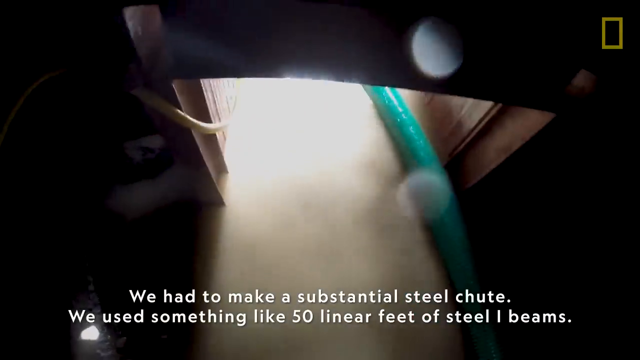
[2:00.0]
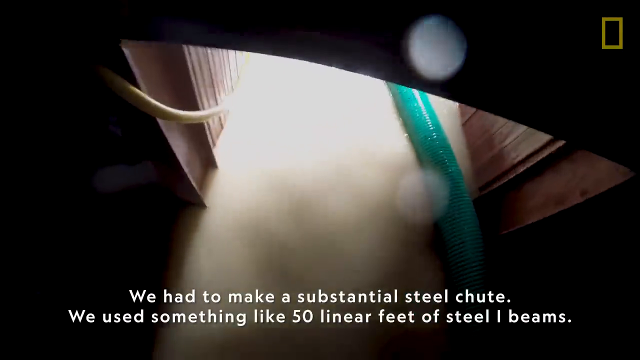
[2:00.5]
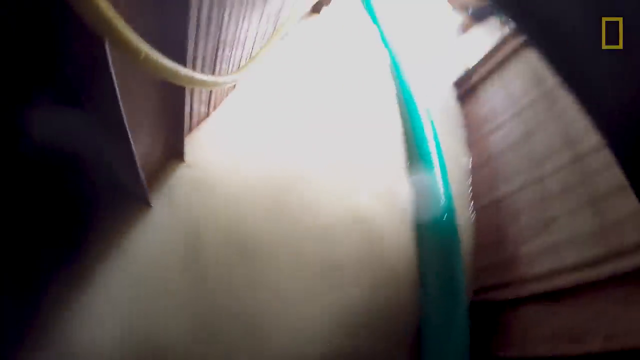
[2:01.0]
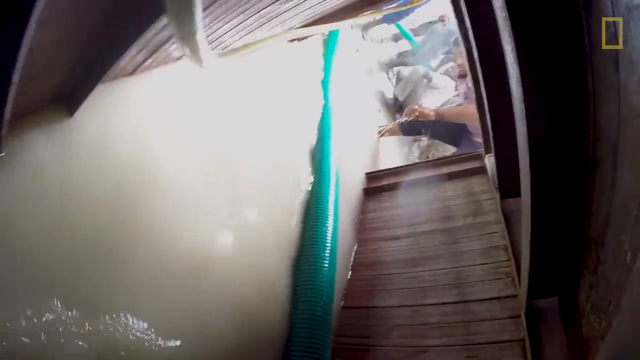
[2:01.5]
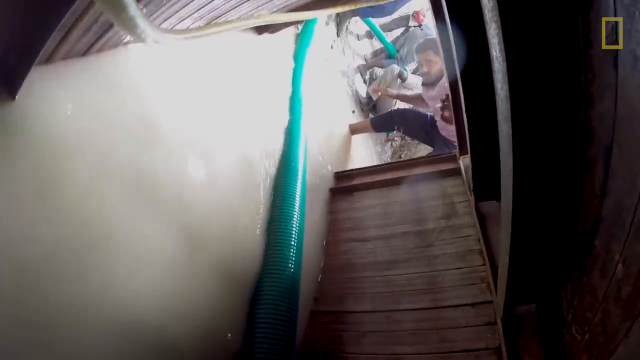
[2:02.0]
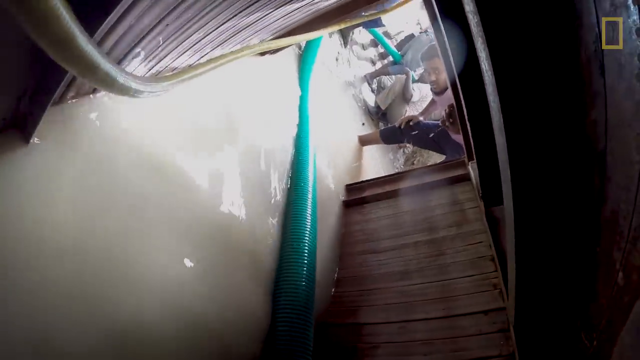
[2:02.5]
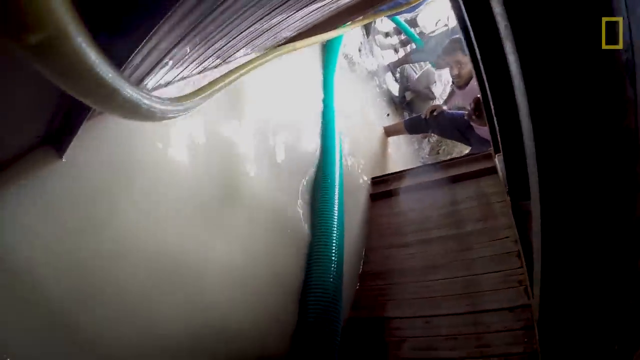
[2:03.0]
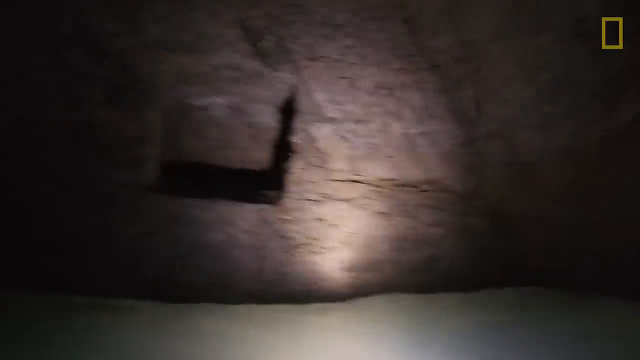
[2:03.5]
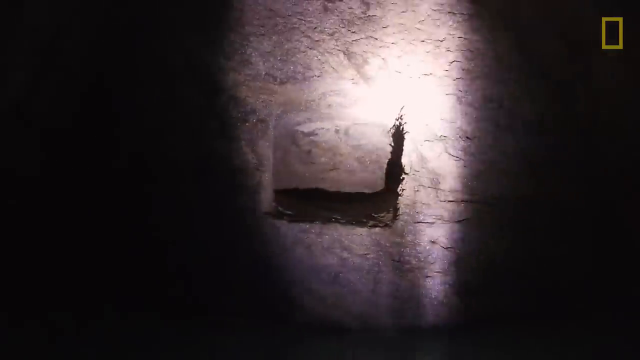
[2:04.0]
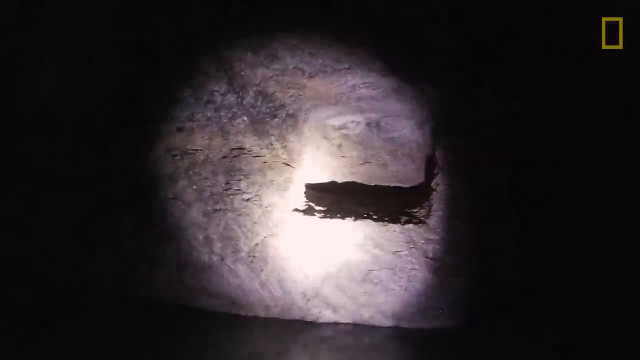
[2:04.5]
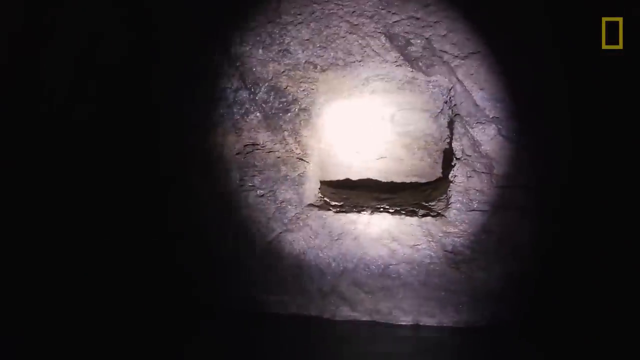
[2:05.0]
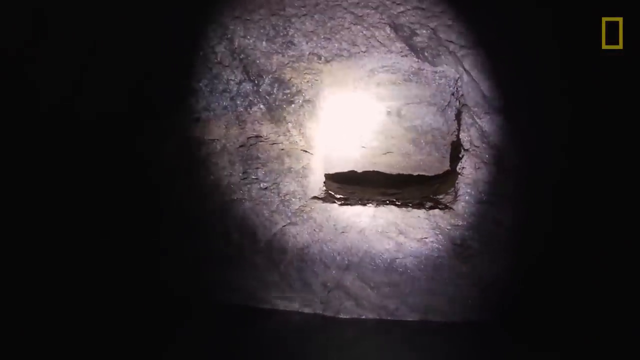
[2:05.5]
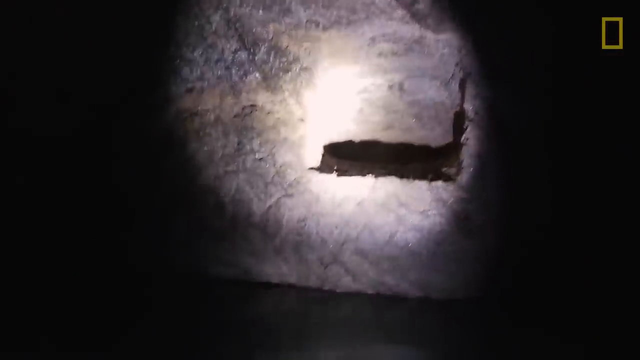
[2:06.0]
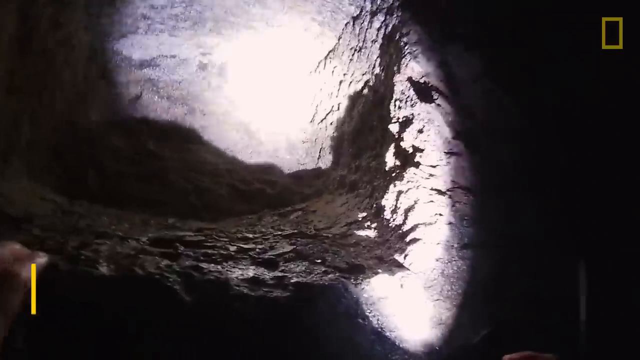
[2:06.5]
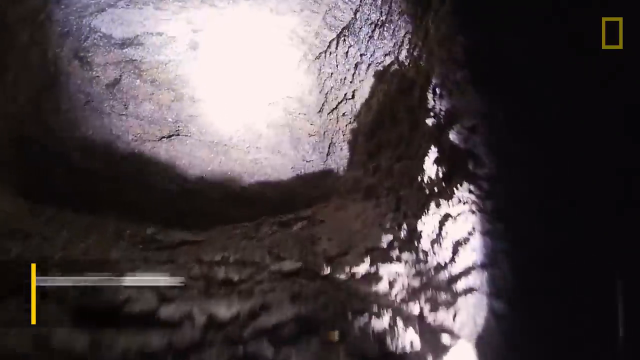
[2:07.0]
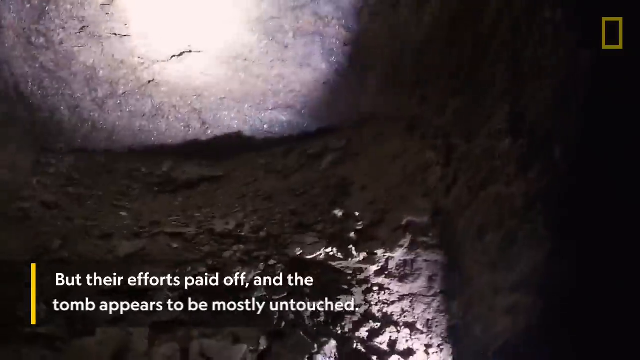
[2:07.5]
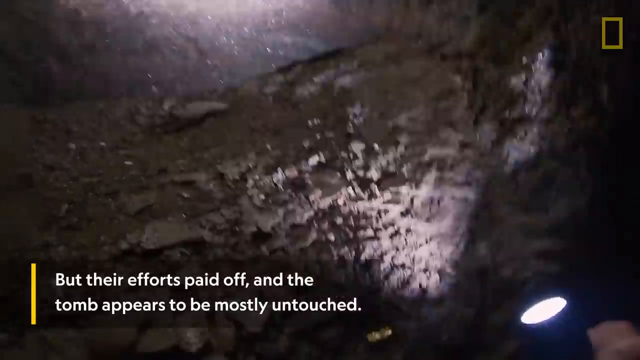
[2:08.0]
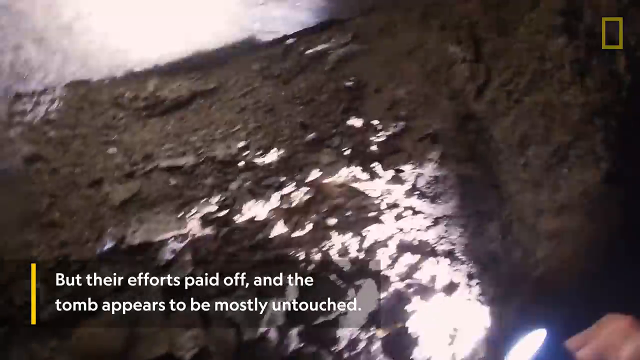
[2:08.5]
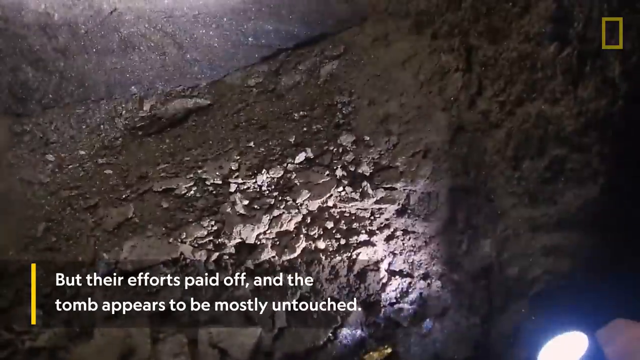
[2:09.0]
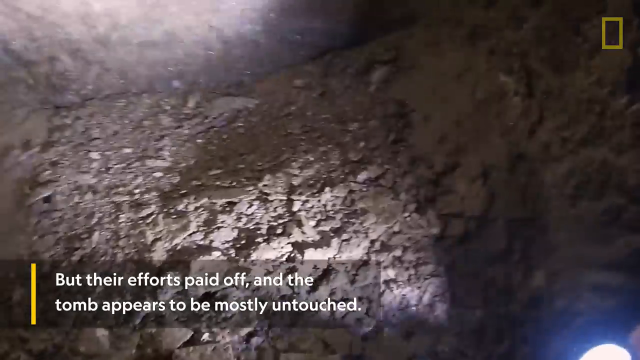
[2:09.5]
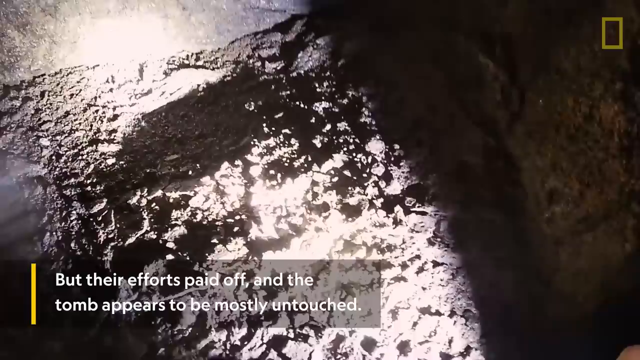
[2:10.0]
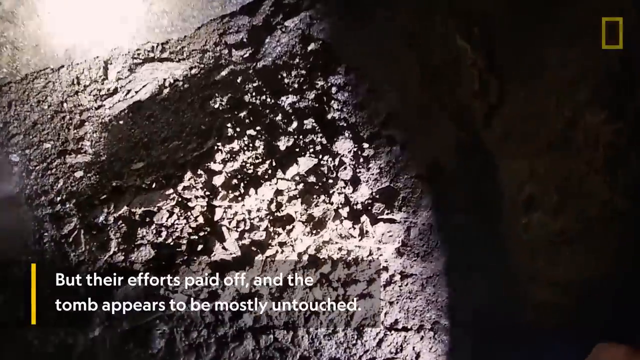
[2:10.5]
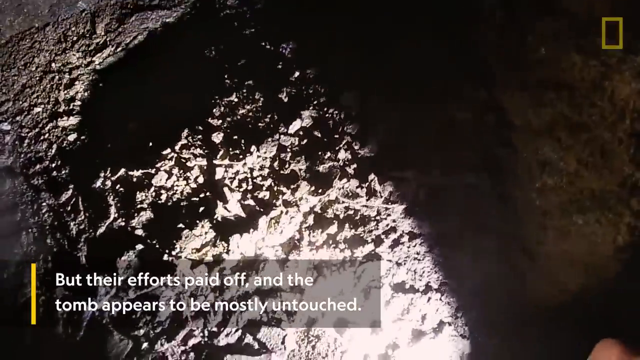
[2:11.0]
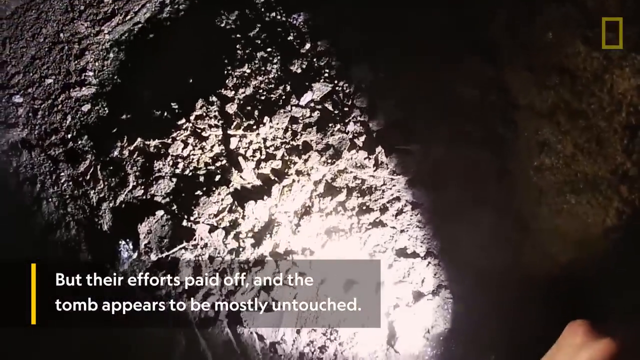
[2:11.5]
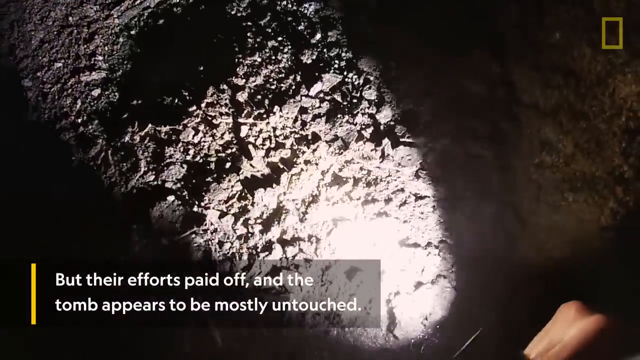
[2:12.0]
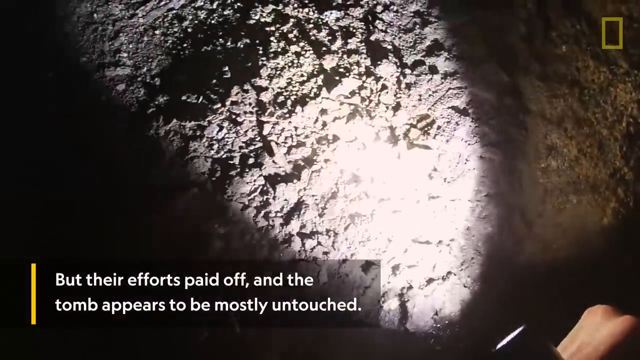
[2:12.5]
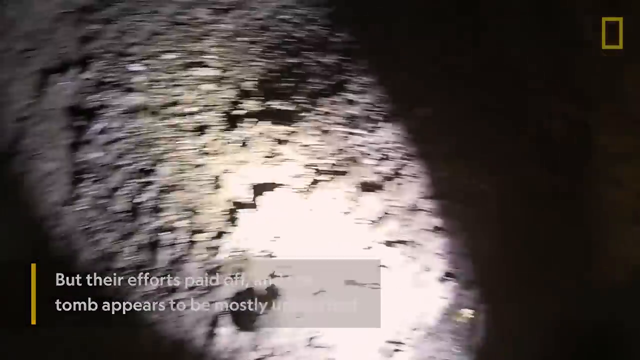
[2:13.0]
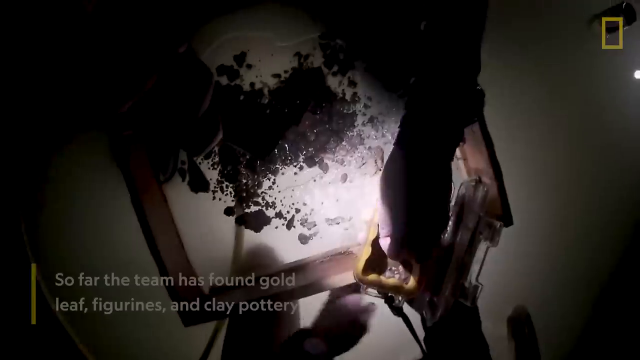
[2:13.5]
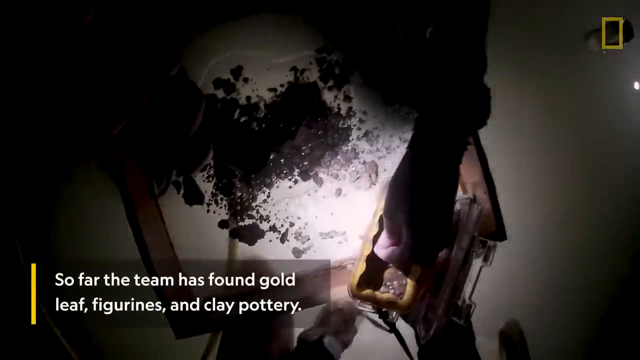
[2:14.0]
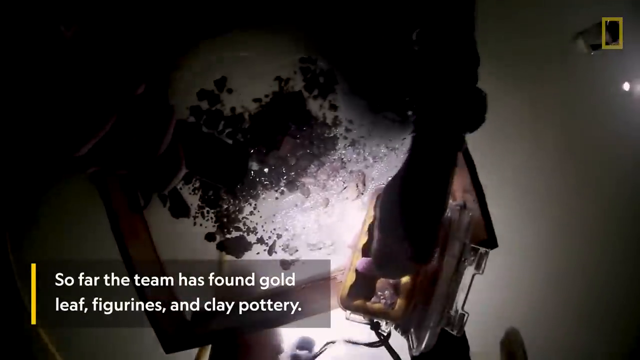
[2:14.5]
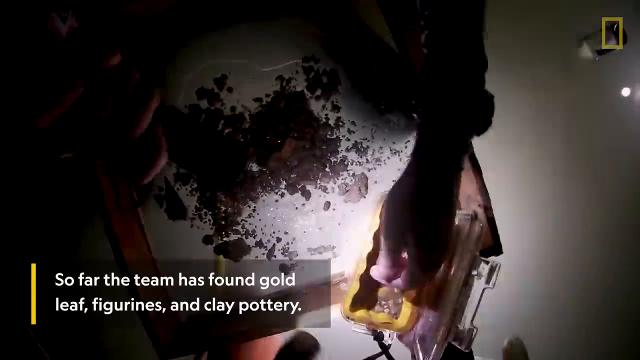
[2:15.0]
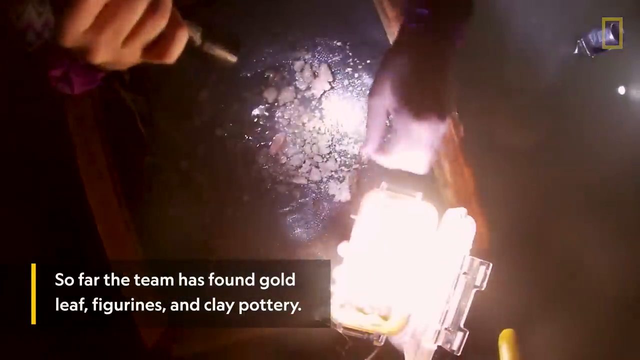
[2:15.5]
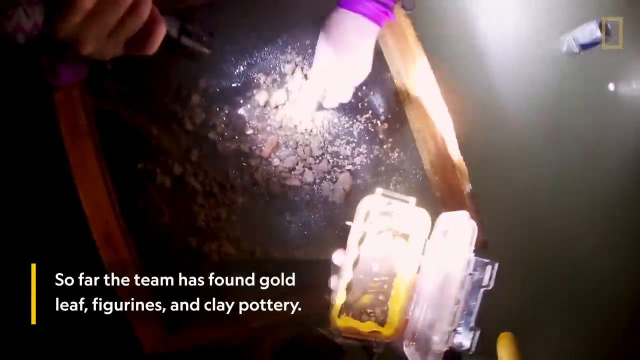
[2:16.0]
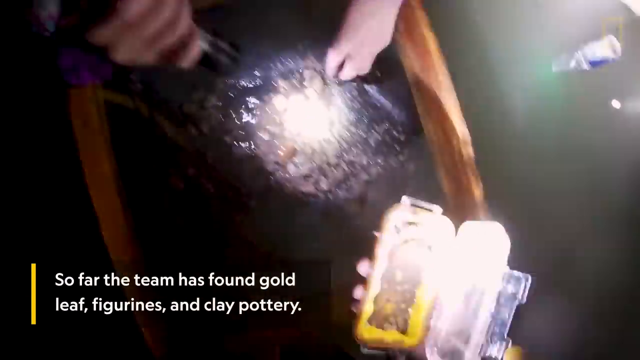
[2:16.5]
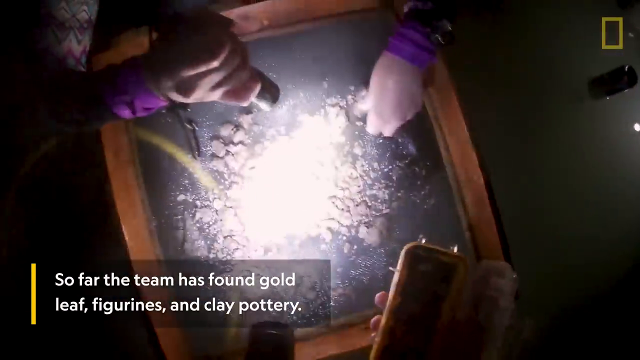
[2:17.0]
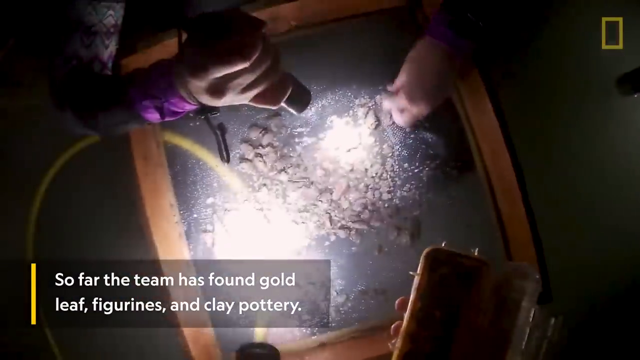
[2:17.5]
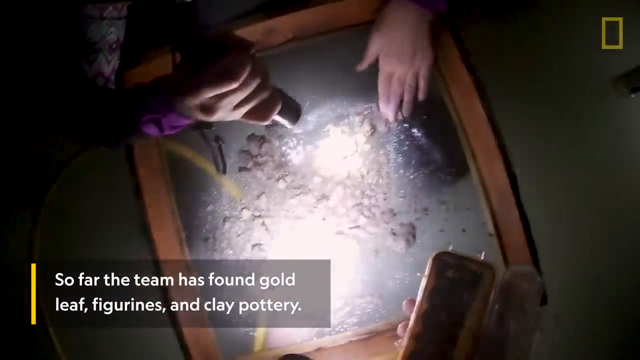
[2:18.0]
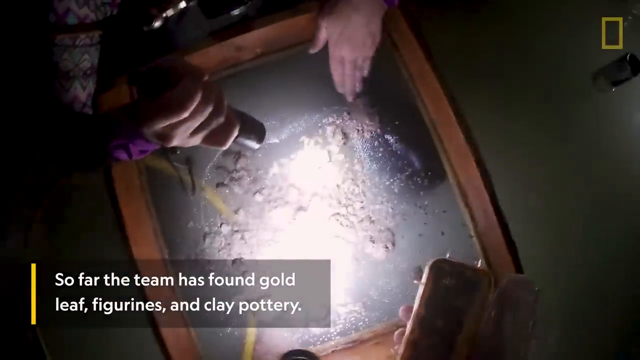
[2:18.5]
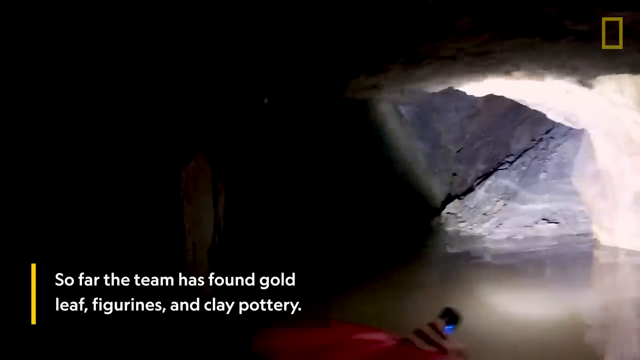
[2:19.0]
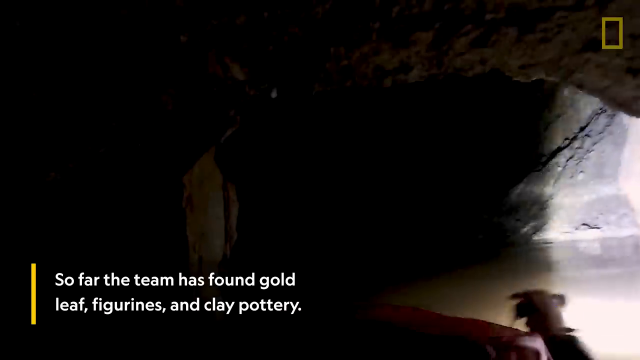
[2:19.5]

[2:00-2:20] A big green pipe is routed from the team's workstation to the front door of the tomb, and a white pipe runs along as well, apparently pulling water away from the tomb door. After hours of work, the tomb appears to be untouched, and the team goes inside. In the tomb they find gold and many treasures: figurines, clay pottery, gold leaf and other artifacts. The team handles and digs through the items without wearing gloves.